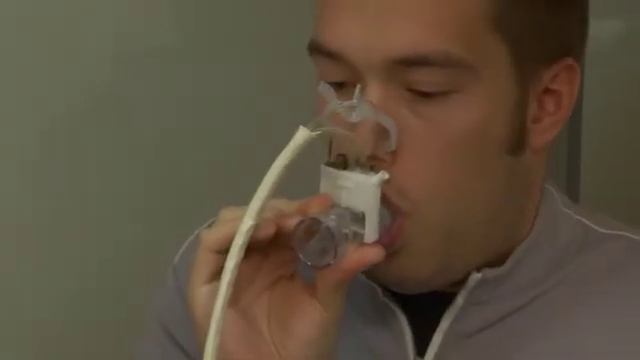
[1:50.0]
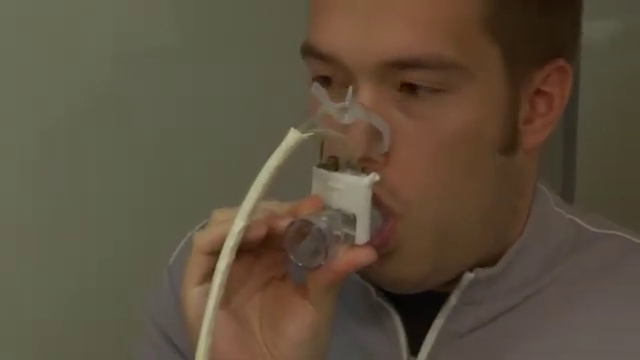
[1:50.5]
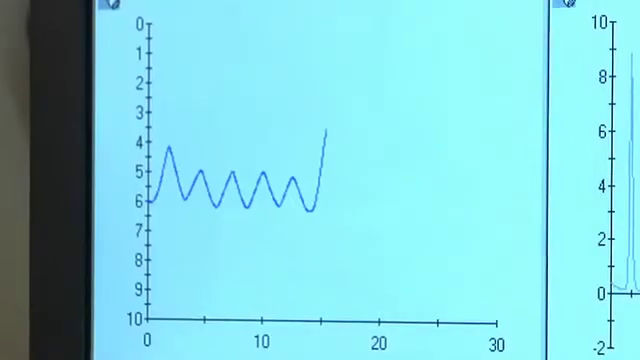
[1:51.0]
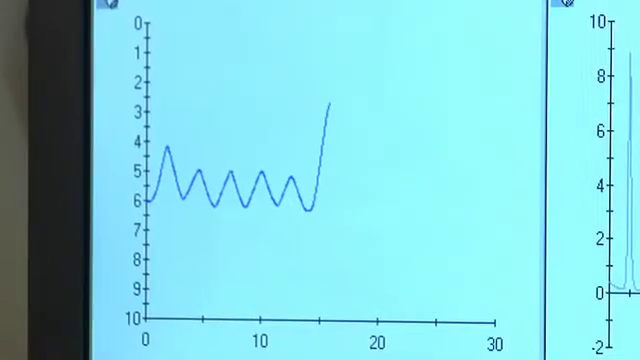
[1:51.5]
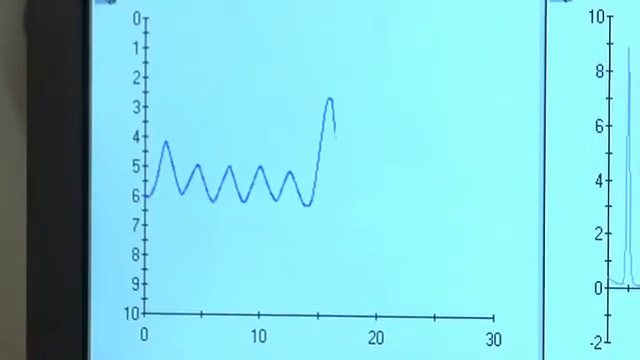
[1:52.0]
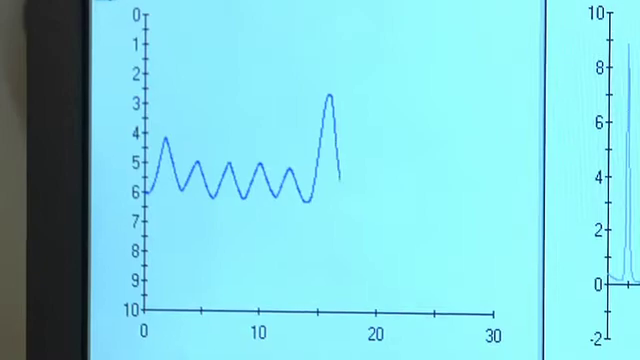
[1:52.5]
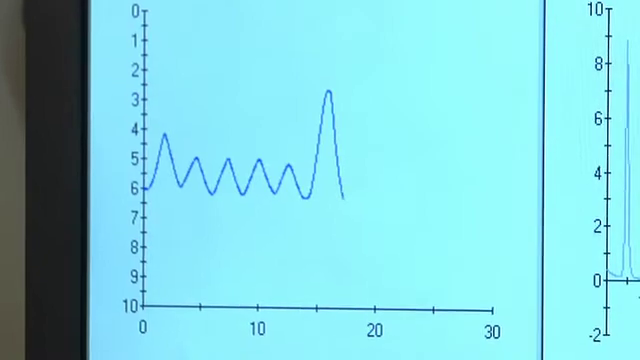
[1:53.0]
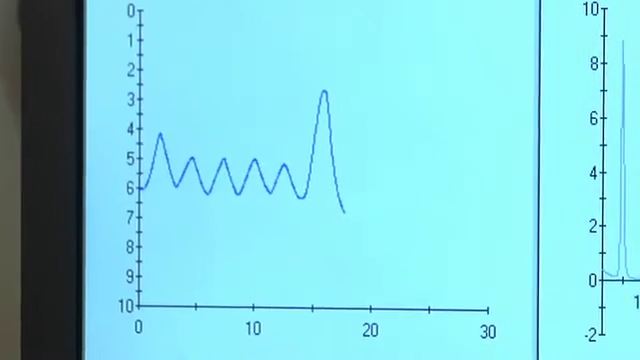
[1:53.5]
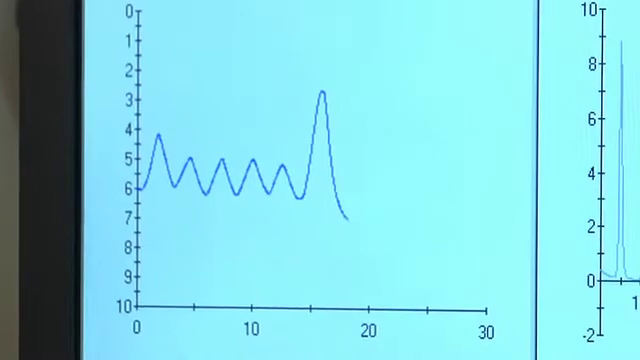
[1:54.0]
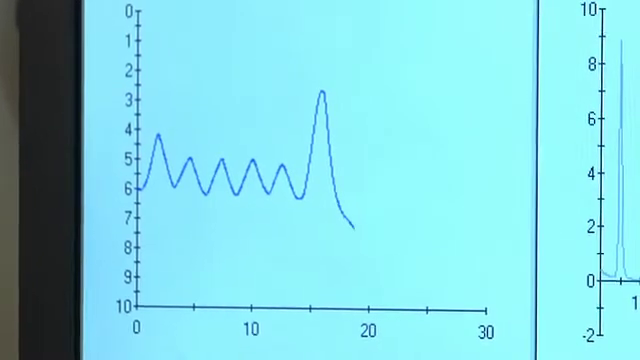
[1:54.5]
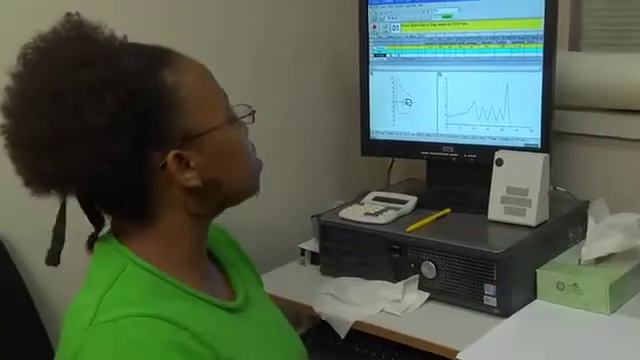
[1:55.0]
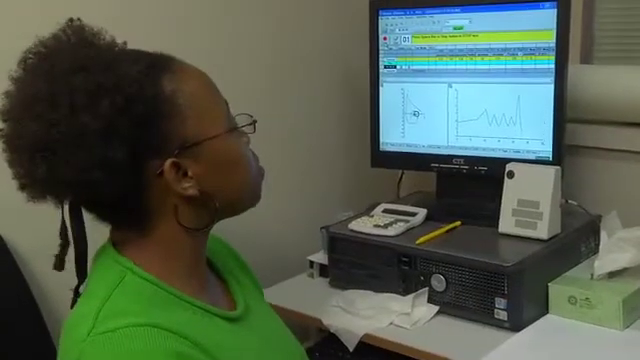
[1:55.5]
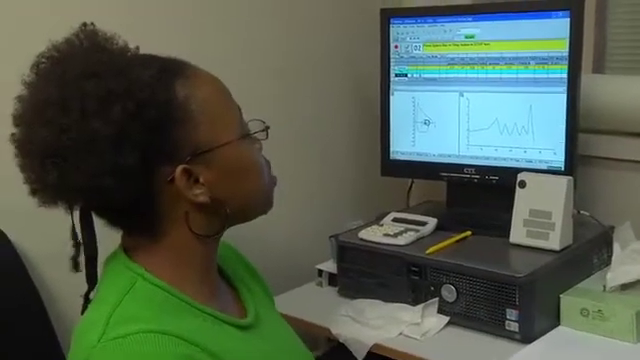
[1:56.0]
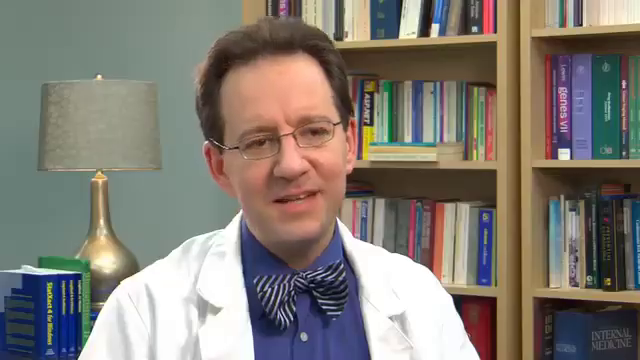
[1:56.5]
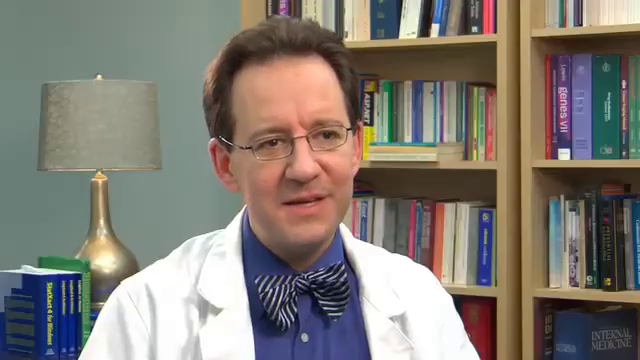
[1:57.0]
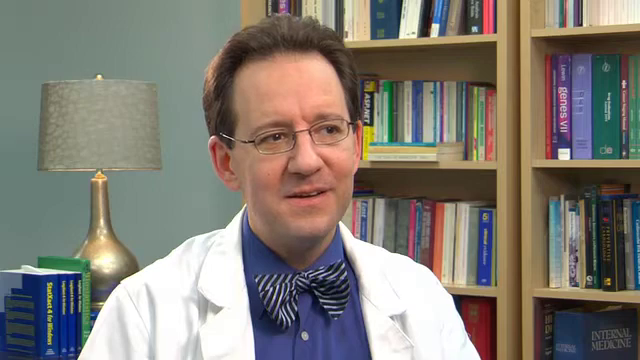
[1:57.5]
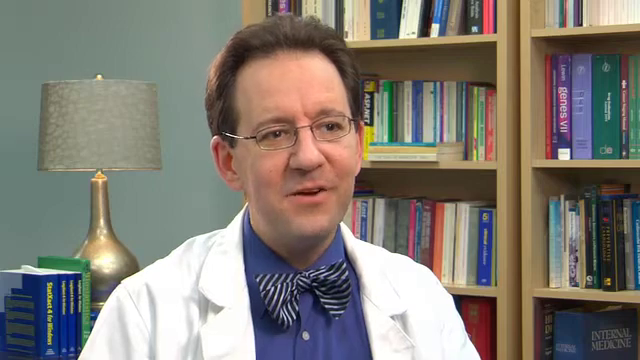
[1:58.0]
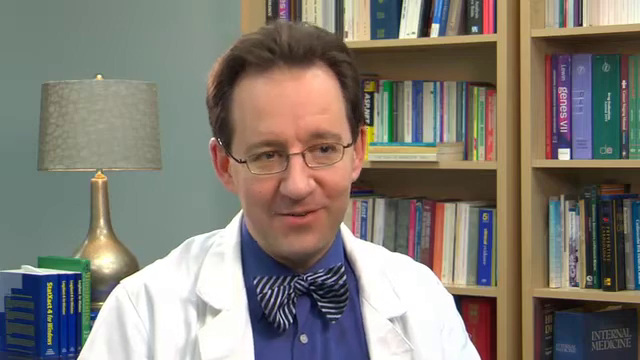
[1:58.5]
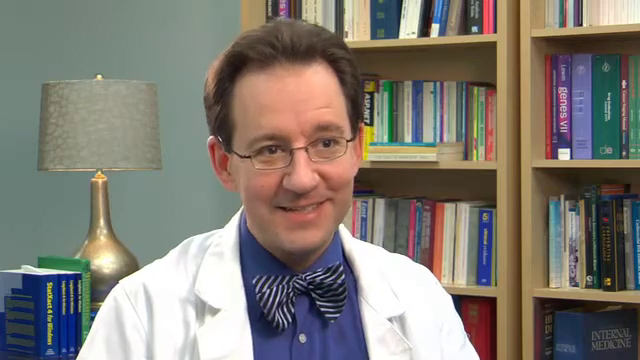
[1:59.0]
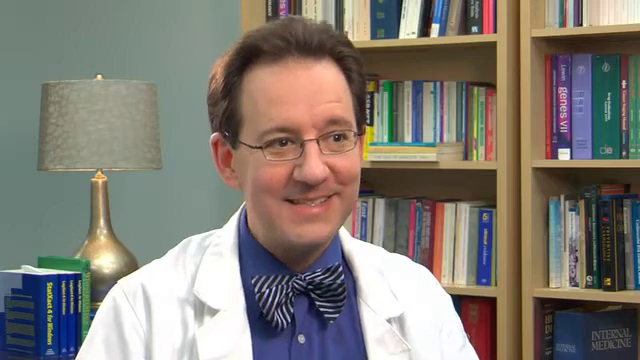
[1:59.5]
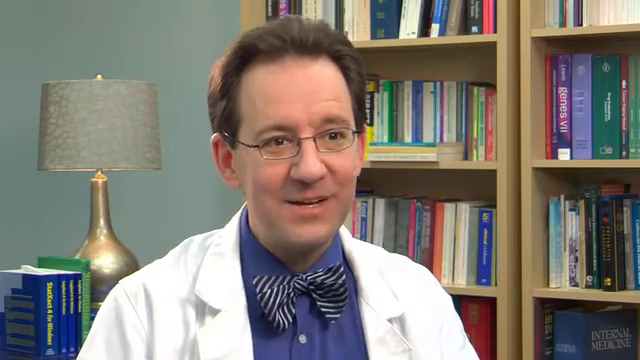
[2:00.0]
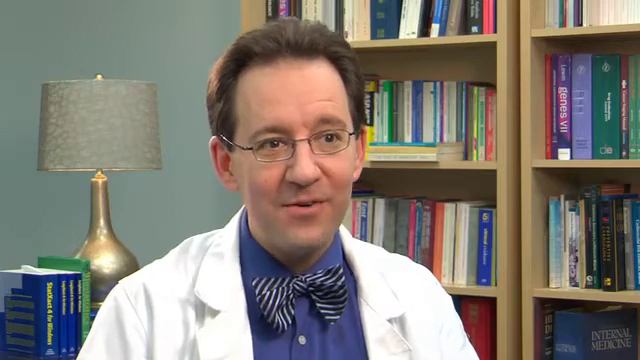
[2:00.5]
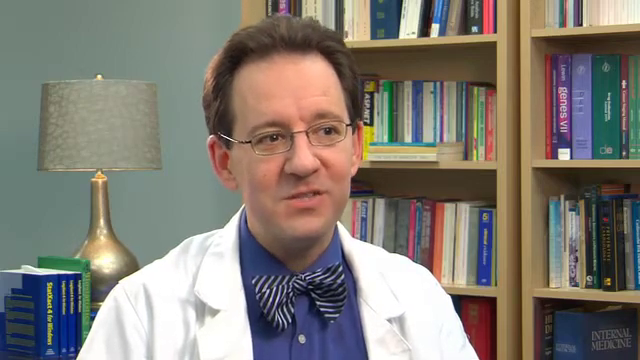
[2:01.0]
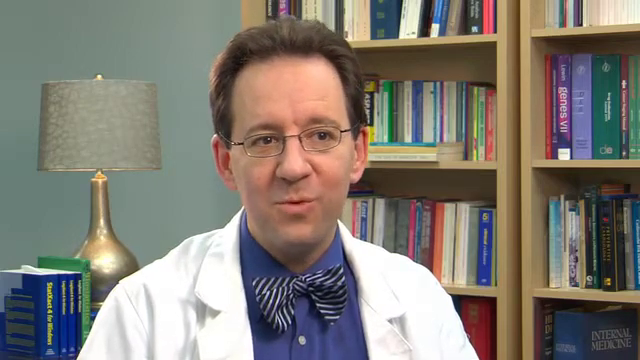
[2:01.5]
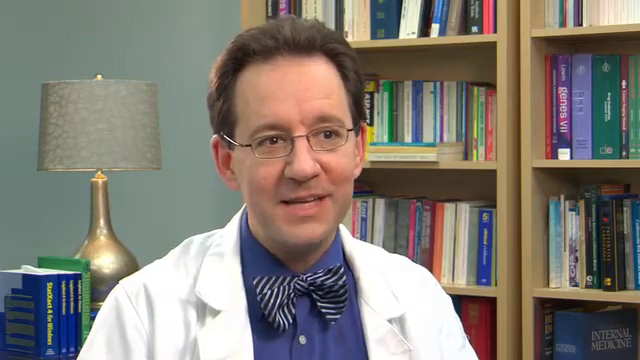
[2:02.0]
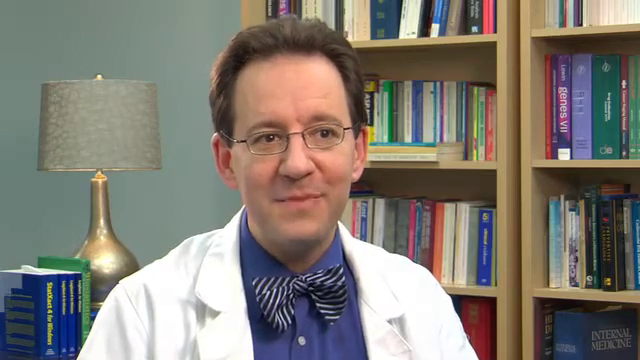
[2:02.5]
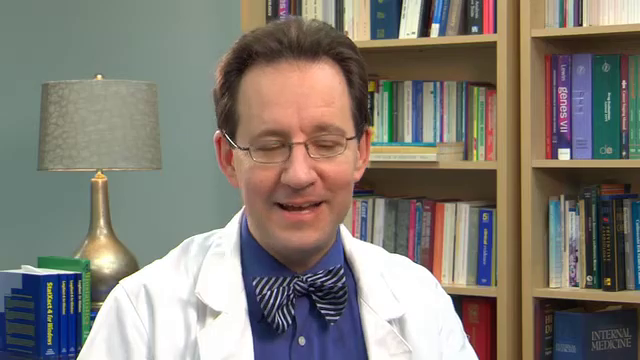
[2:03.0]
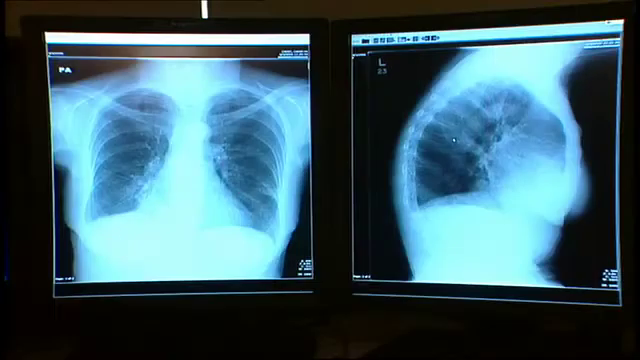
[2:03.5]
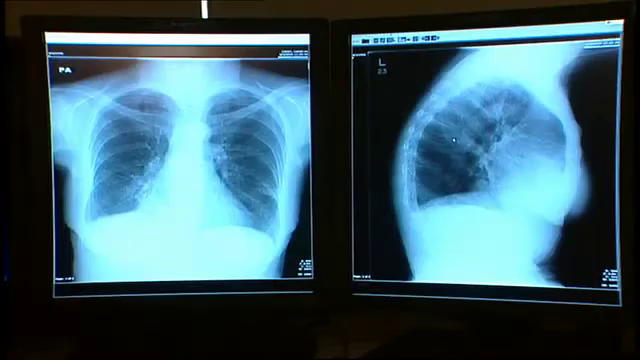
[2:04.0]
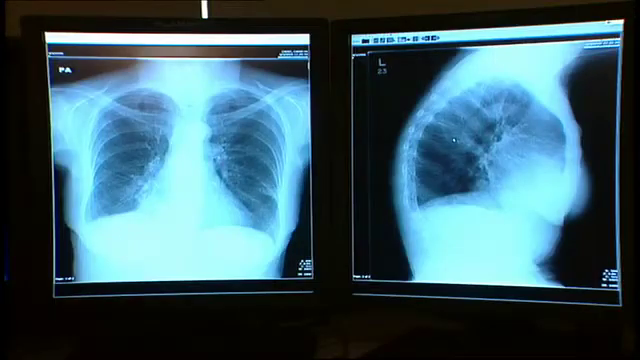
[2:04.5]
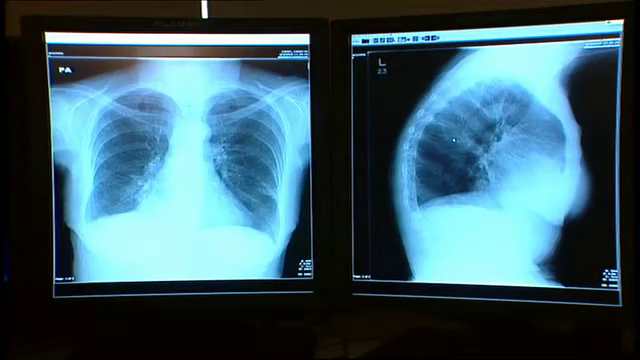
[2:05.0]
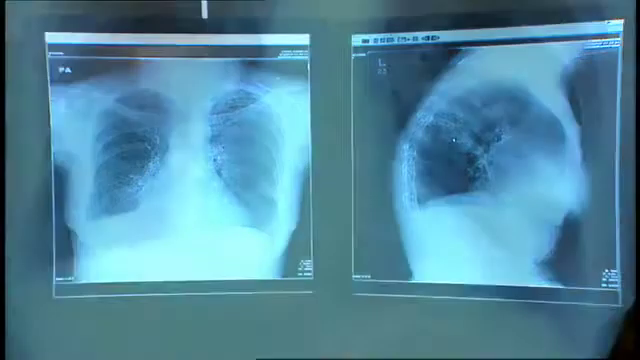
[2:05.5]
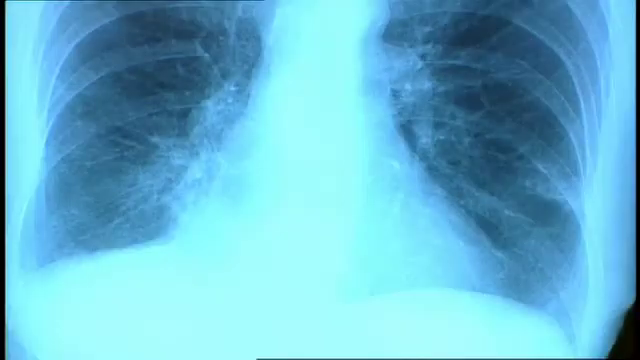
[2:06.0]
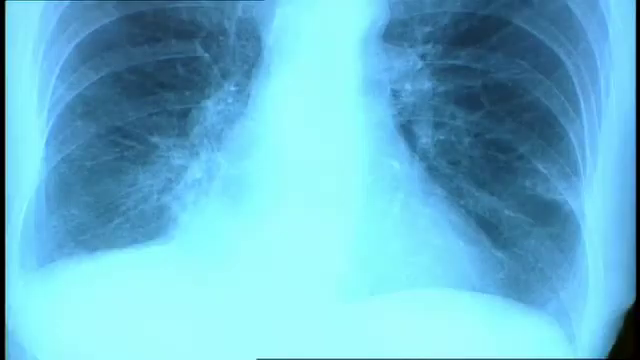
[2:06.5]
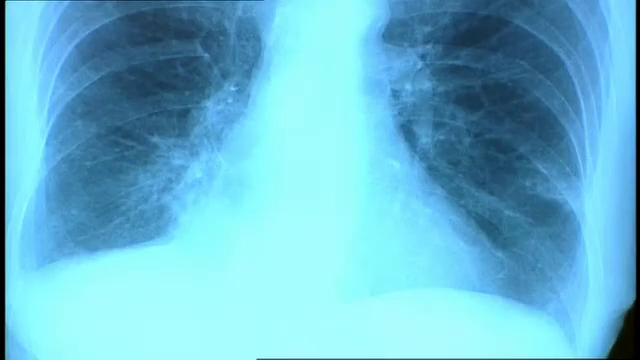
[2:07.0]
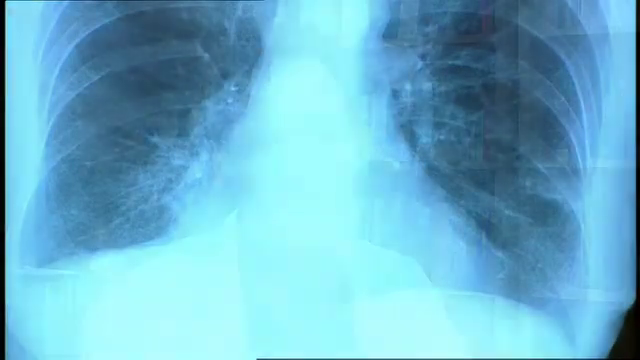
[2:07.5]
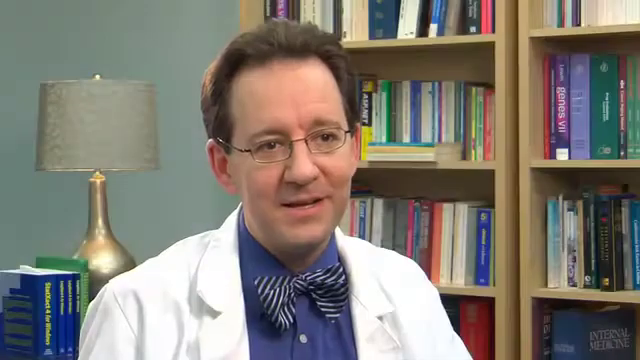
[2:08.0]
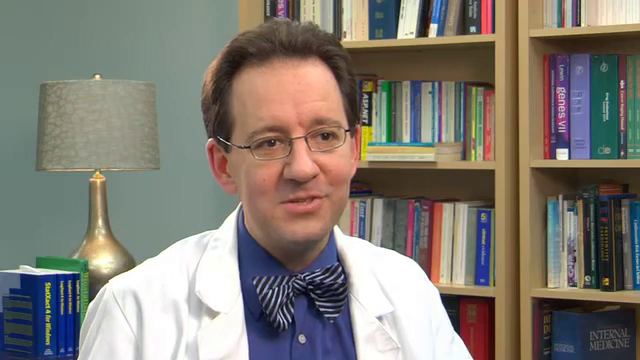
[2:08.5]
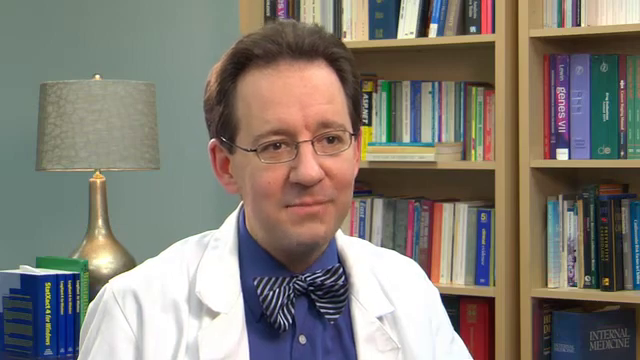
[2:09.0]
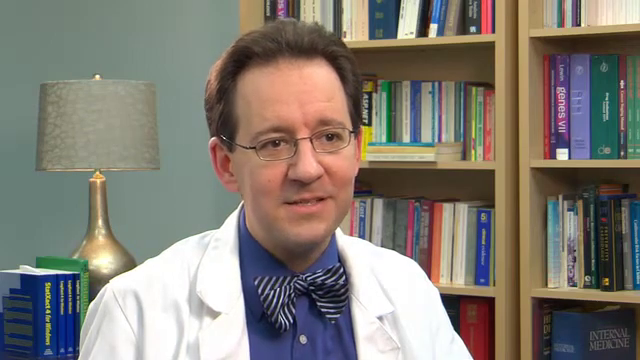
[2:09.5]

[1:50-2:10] A man stands toward the right side of the screen, a bit off center. He has brown hair that is low cut on the sides and longer on top, bushy brown eyebrows, a double chin and stubble in the beard area of his face. He has some sort of breathing apparatus on his mouth, or possibly something used to measure the level of oxygen in his blood. There is a transparent white clamp on his nose area. Below this, a part is inside his mouth: it looks like a white or clear tube that he inhales into, connected to a square box shape, and white tubing is also attached to this medical apparatus. Next, a screen is shown that looks like a monitor, perhaps measuring his oxygen saturation, as it looks similar to that.